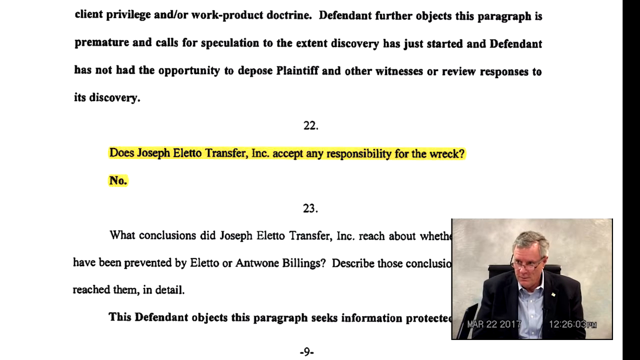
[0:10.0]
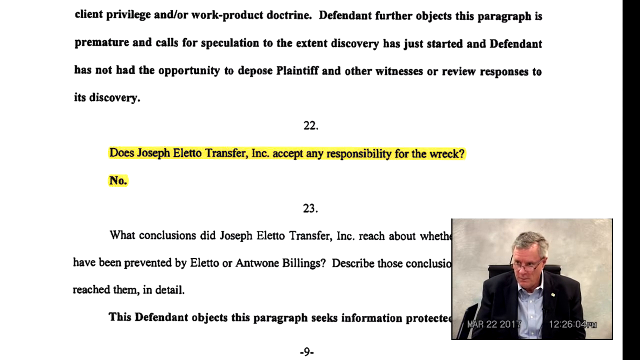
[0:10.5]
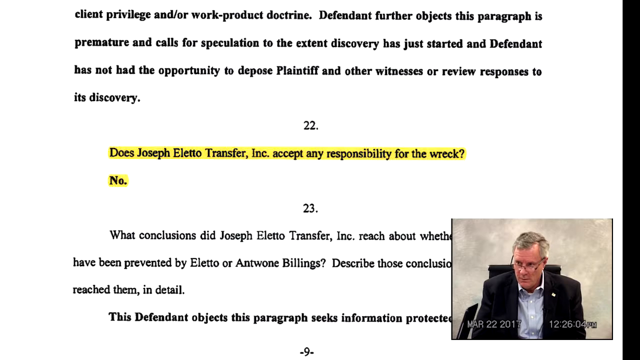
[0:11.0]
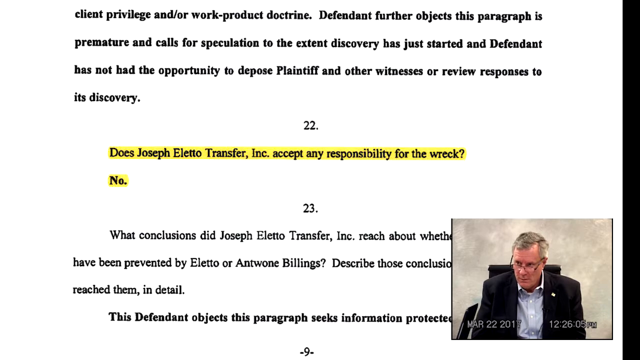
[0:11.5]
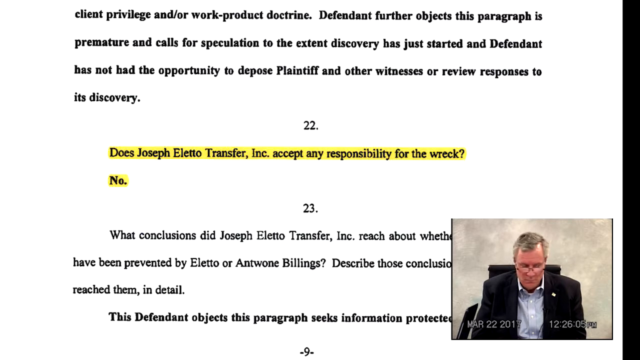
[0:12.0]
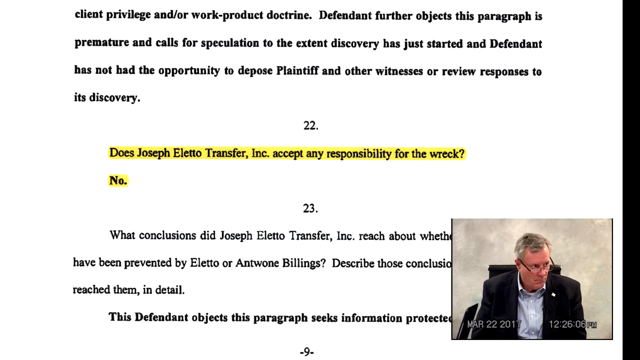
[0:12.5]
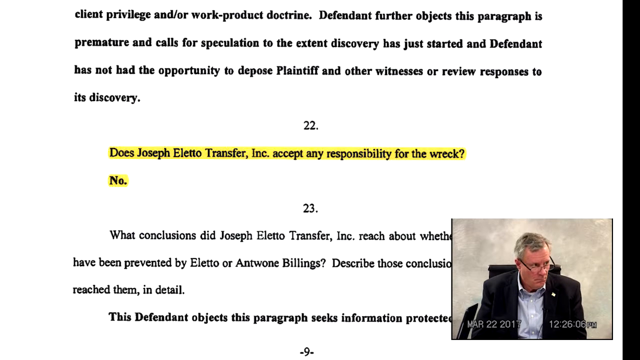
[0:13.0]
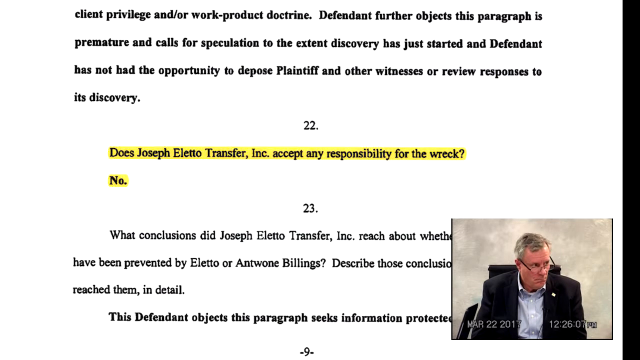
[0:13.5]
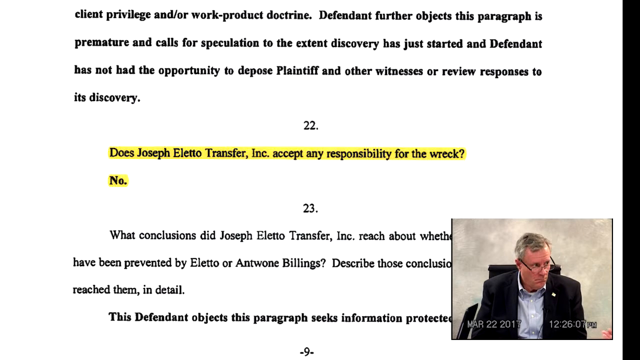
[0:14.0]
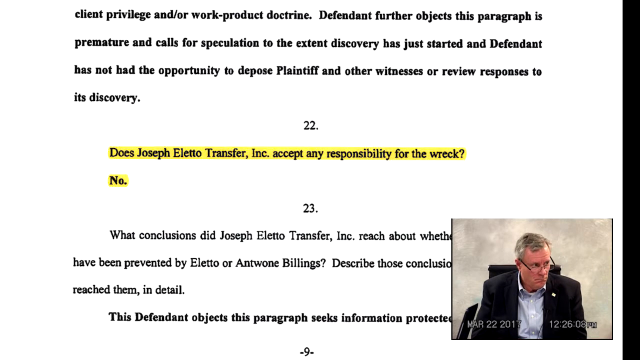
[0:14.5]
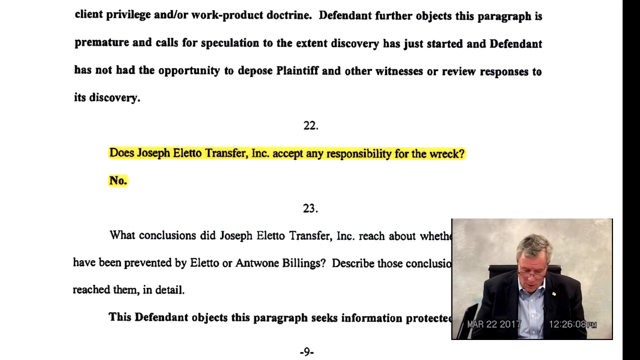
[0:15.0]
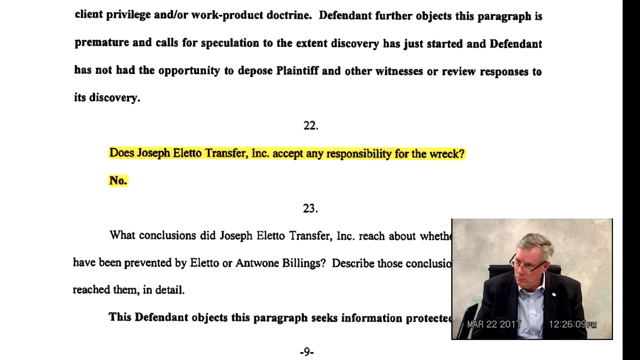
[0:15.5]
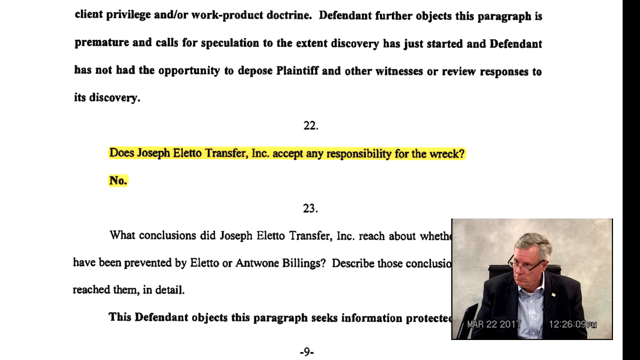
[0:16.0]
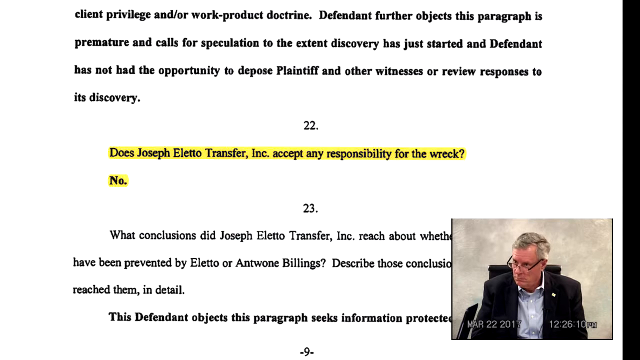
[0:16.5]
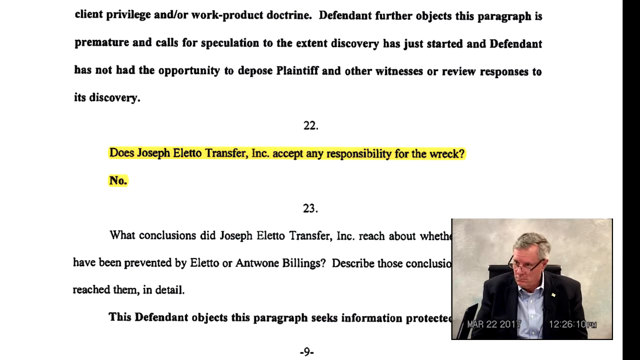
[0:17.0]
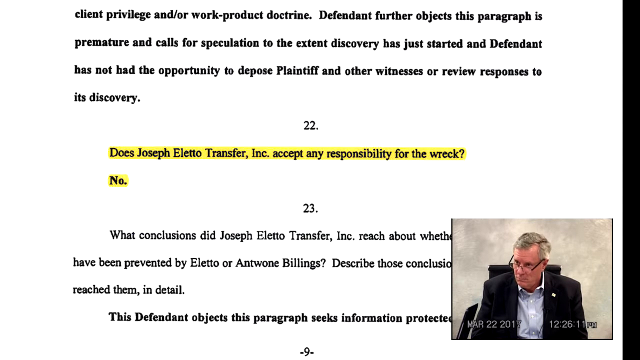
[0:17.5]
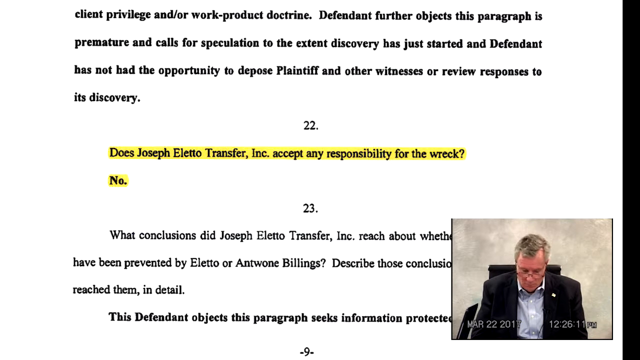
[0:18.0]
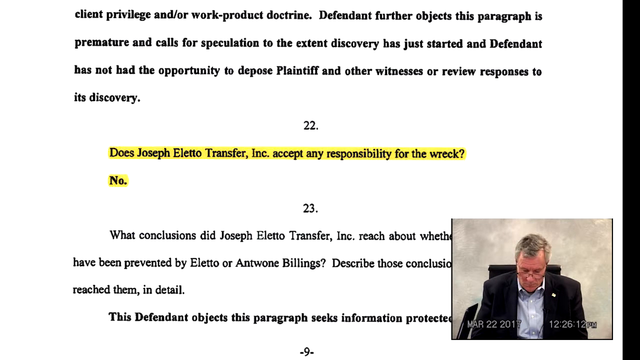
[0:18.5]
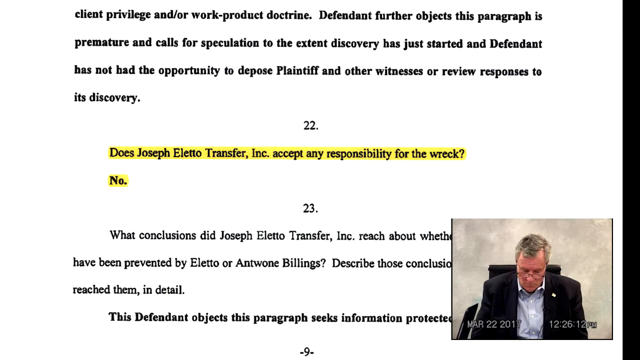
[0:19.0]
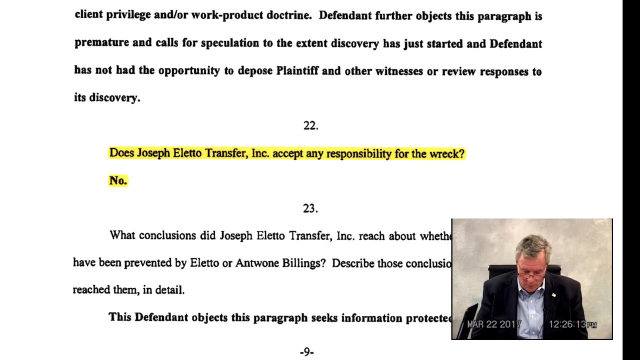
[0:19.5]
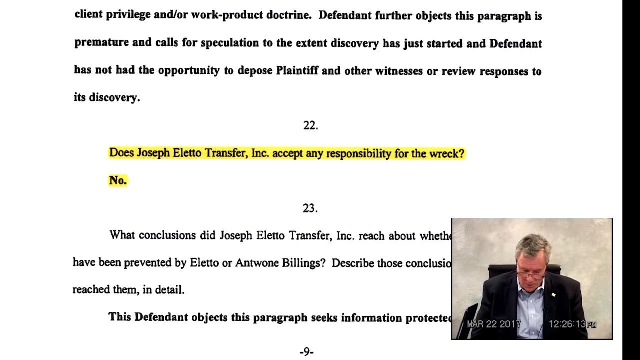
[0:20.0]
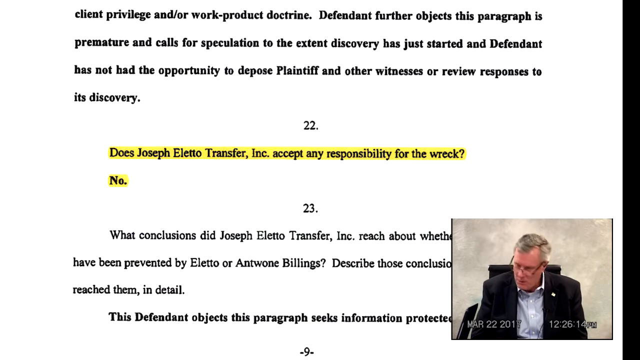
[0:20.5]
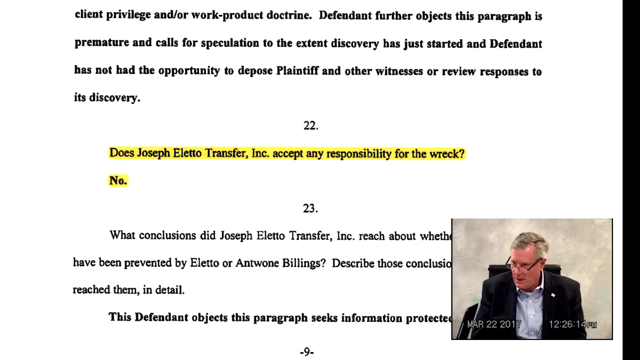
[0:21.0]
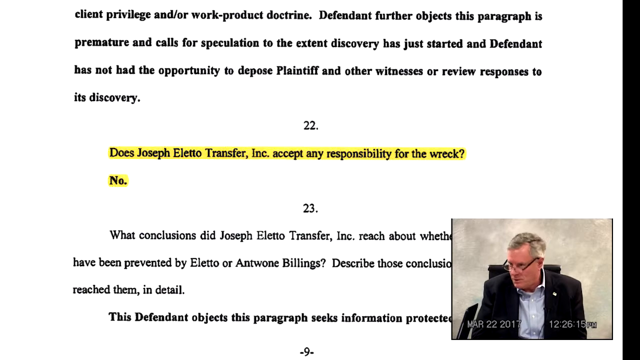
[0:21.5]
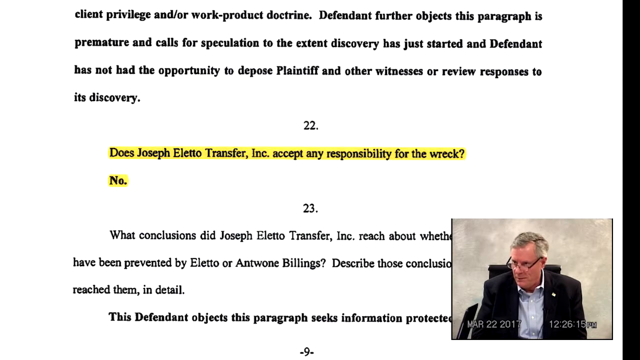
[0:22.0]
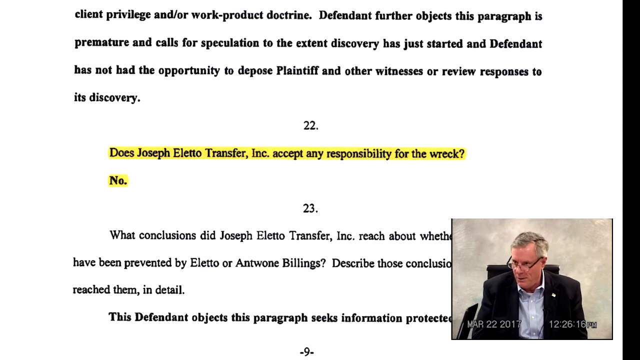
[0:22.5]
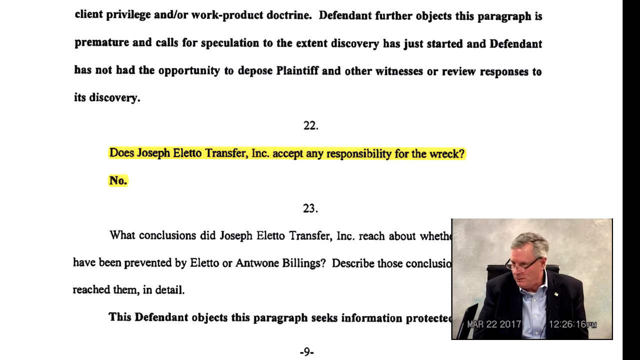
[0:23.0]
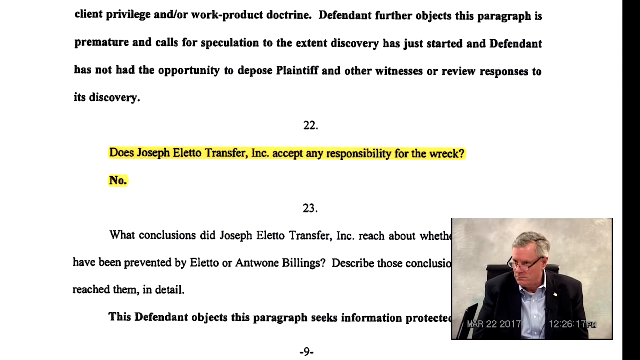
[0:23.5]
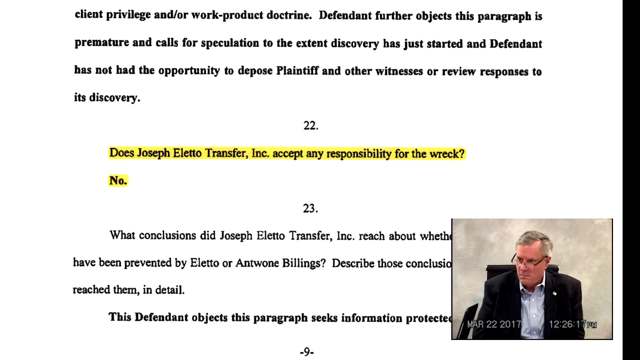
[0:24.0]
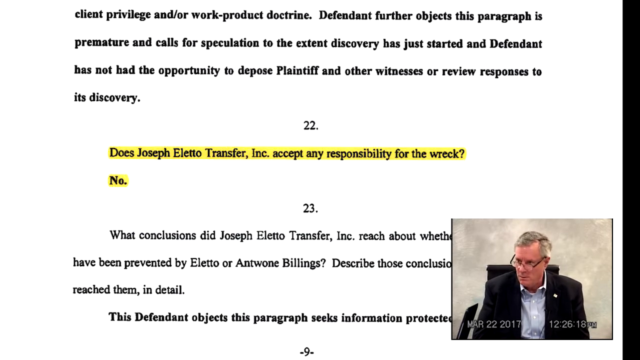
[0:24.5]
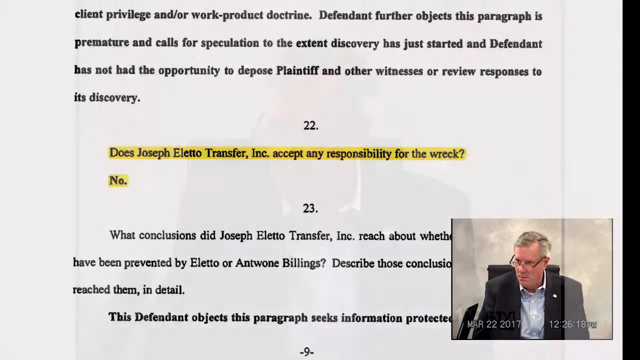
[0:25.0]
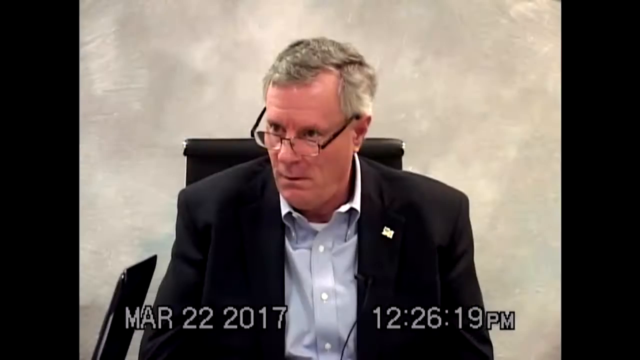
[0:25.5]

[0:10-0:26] The same text remains on the screen, and a small video of the man covers most of the words at the bottom. The video then zooms out and the man fills the whole screen as he speaks. He seems very serious. The date is the 22nd of March 2017 and the time is 26 minutes past 12. He keeps looking from left to right while he speaks, as if he is having a conversation with somebody.